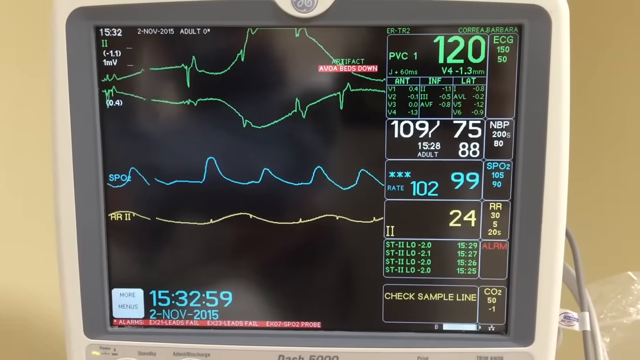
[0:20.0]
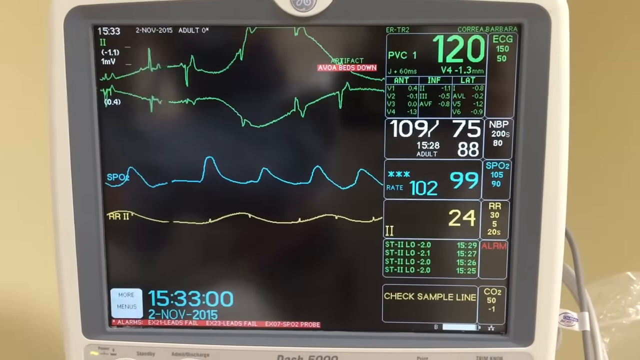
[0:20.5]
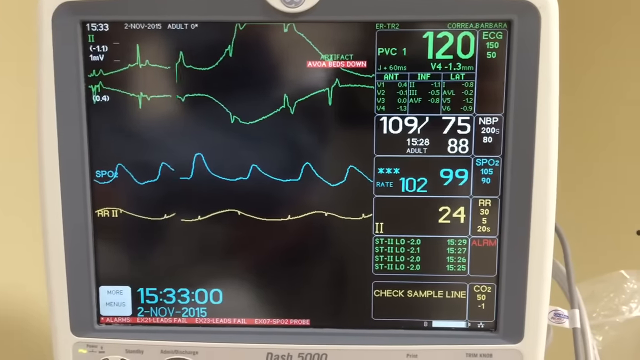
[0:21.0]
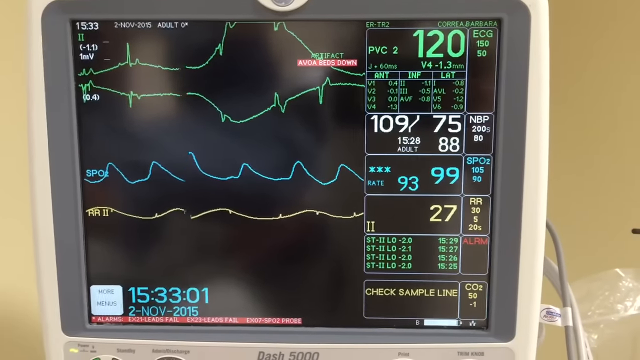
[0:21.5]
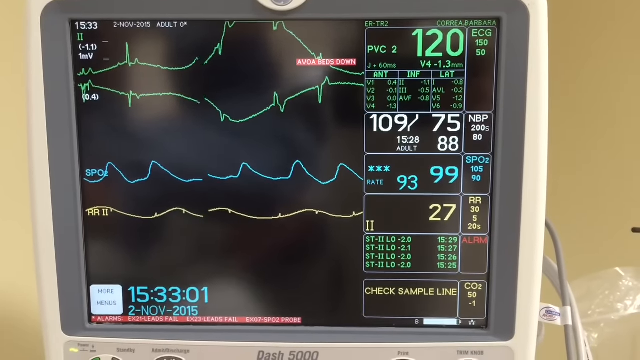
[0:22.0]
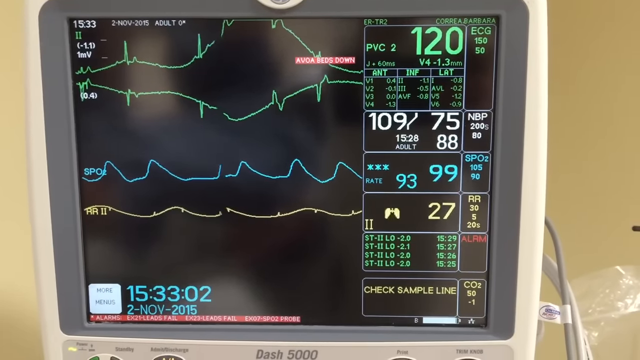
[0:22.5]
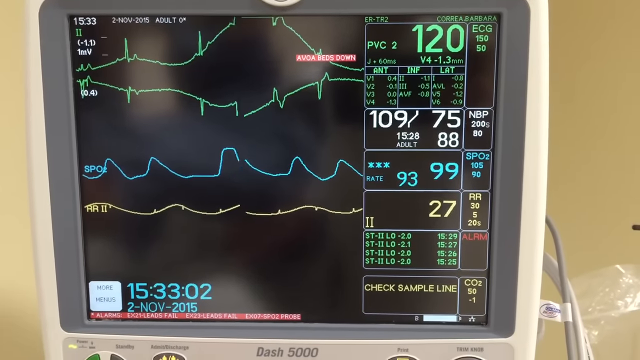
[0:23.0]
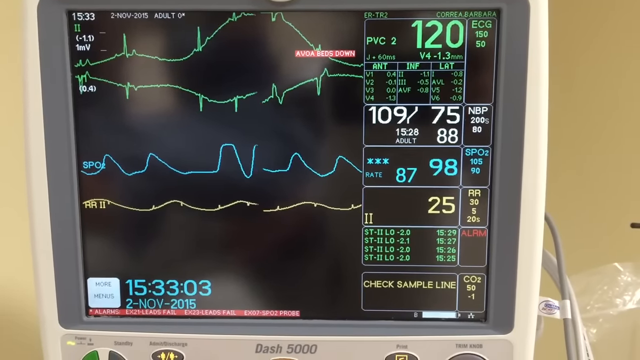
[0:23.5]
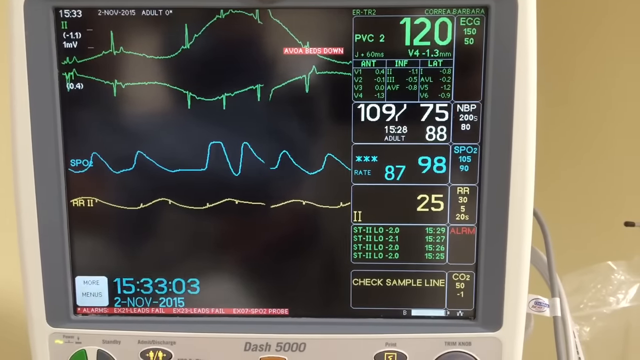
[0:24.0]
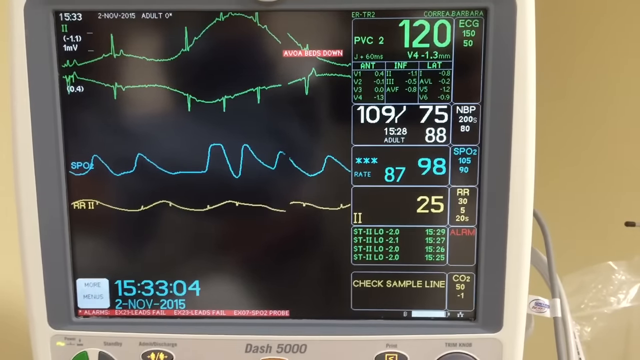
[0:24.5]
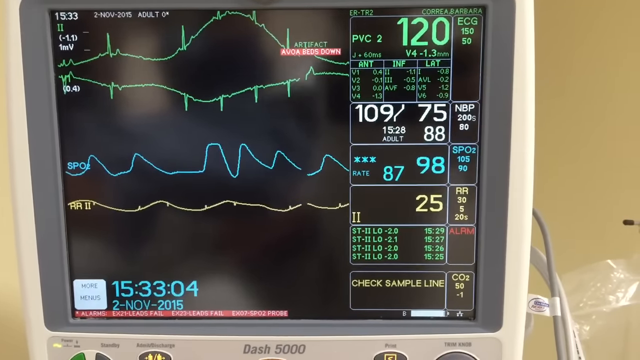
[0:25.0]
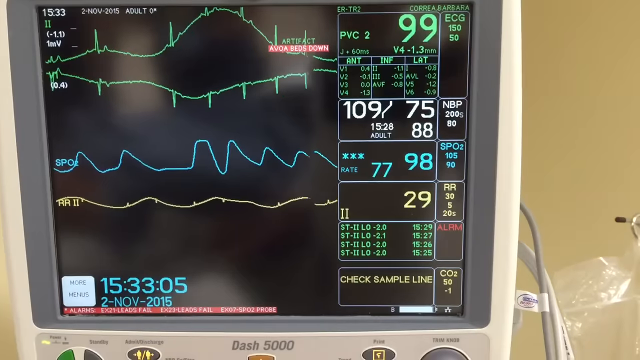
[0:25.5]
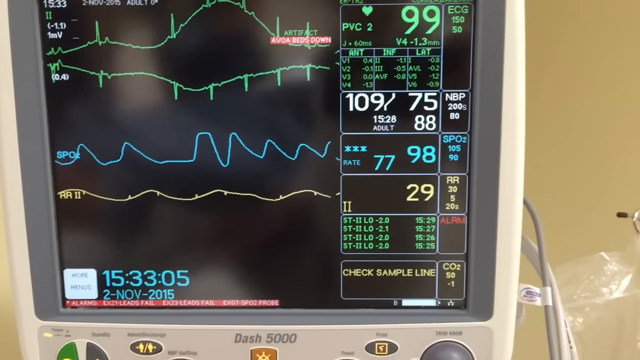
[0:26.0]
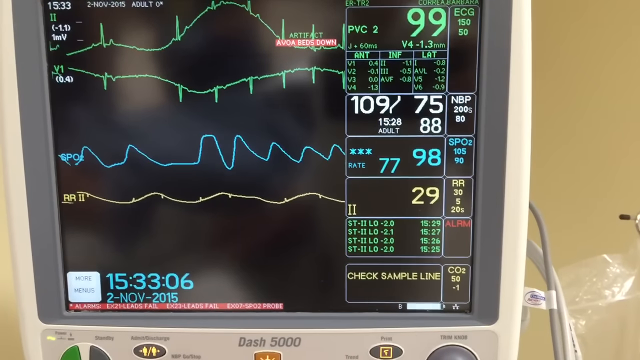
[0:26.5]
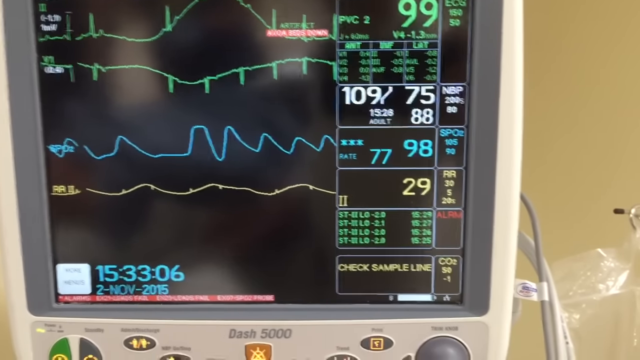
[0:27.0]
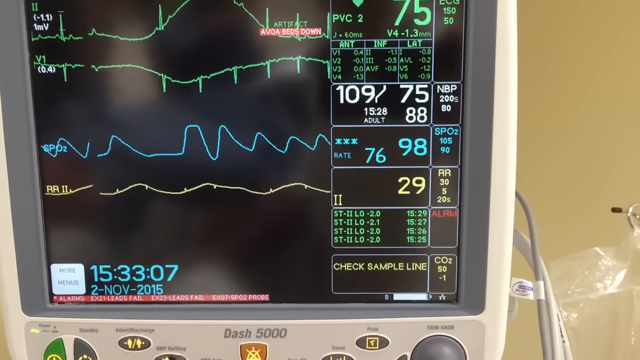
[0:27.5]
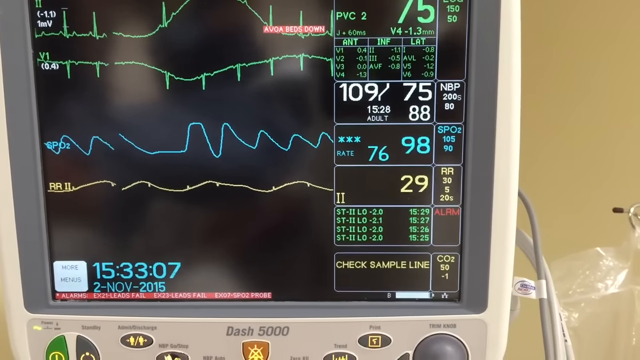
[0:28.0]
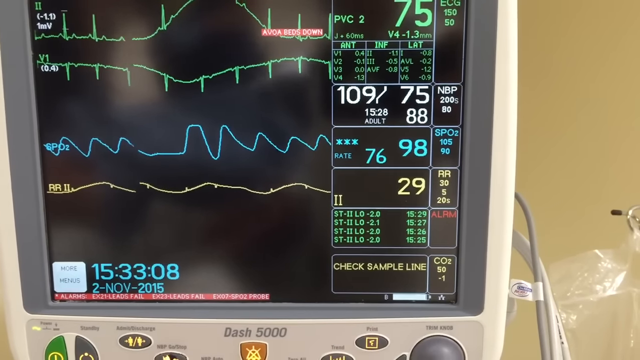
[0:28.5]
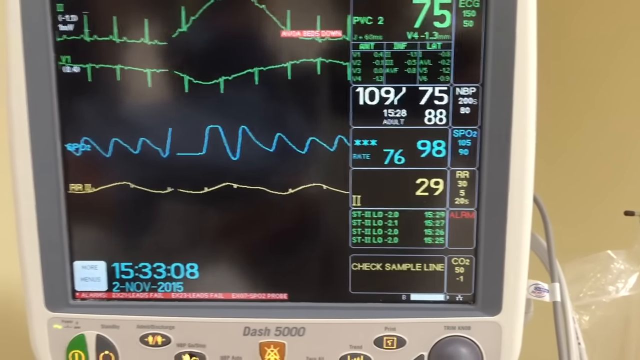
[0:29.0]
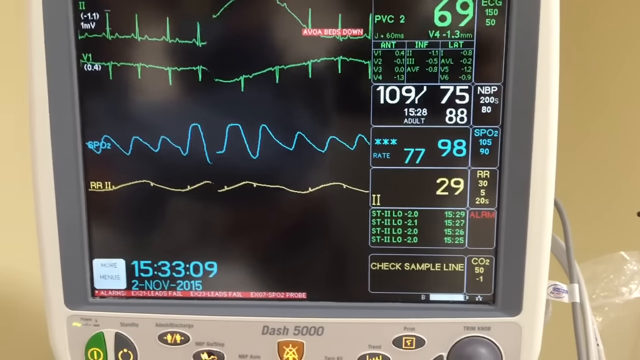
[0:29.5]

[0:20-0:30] The heart rate numbers come back on the screen, reading around 79, within a normal range. The monitor continues displaying everything steadily and the graphs look normal. Toward the end, the heart rate suddenly jumps from the 70s up to 120.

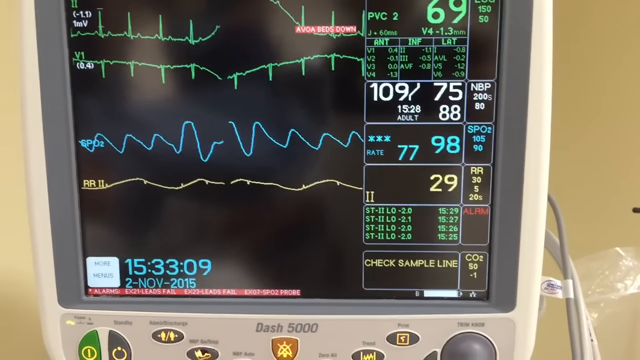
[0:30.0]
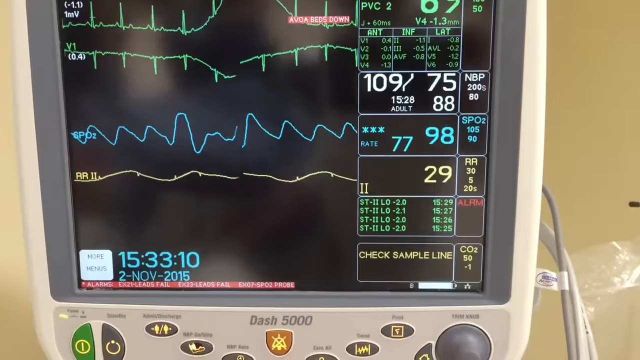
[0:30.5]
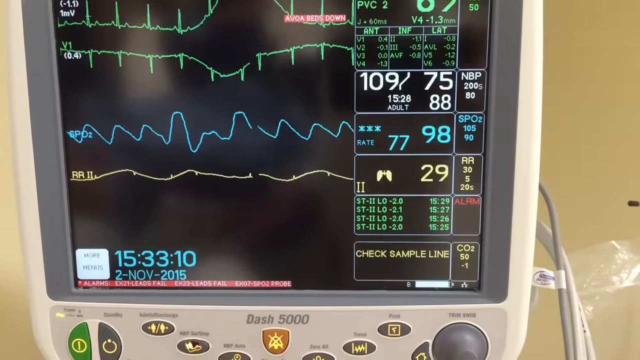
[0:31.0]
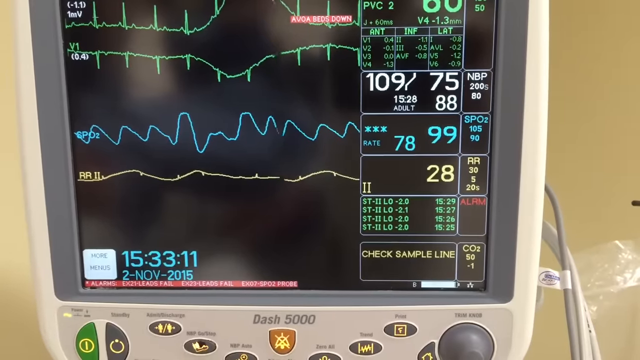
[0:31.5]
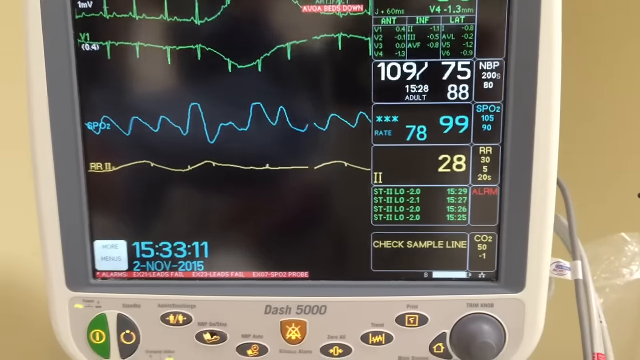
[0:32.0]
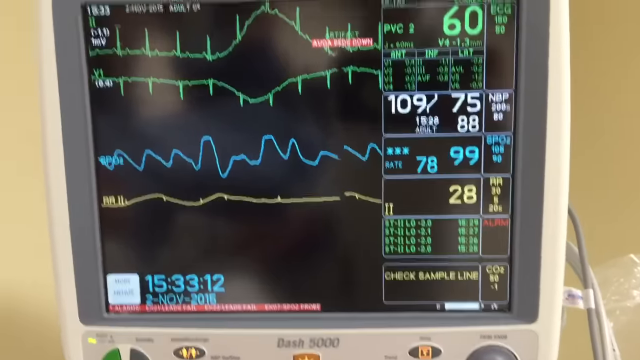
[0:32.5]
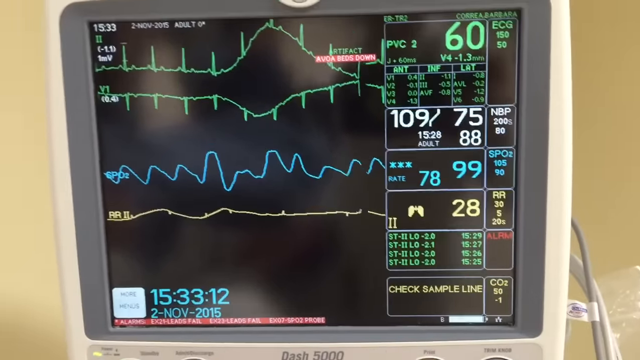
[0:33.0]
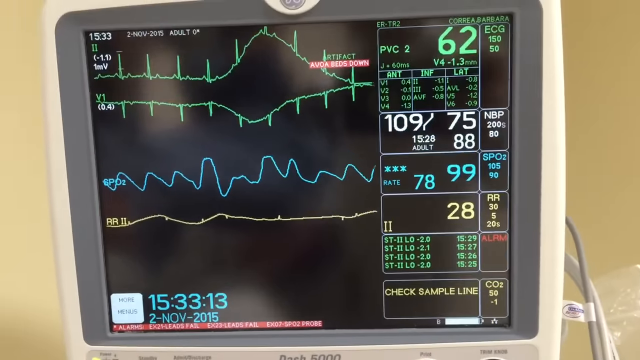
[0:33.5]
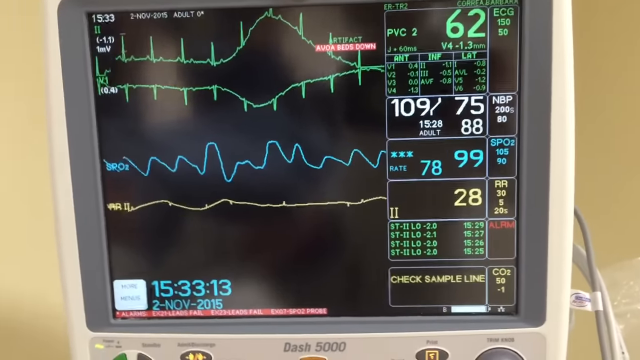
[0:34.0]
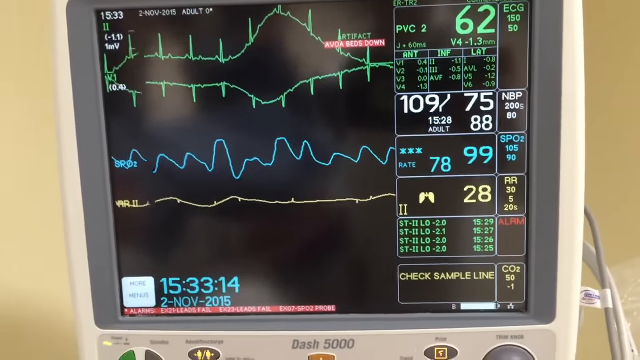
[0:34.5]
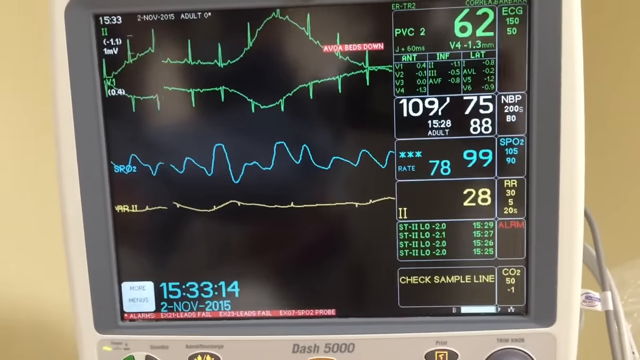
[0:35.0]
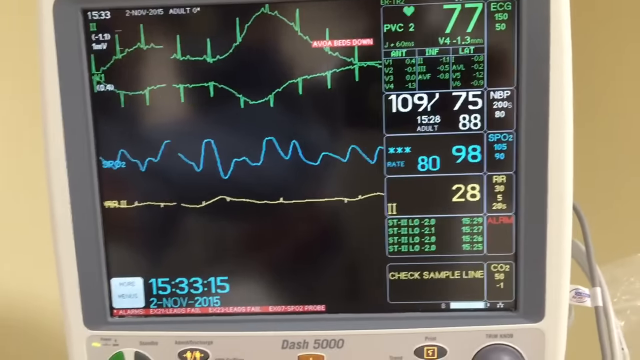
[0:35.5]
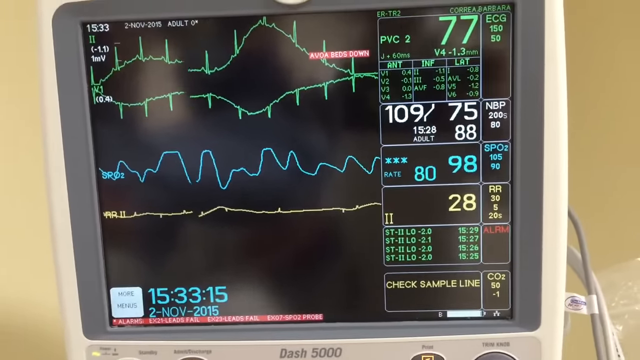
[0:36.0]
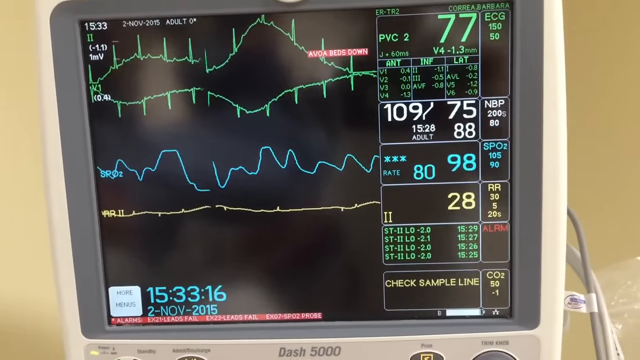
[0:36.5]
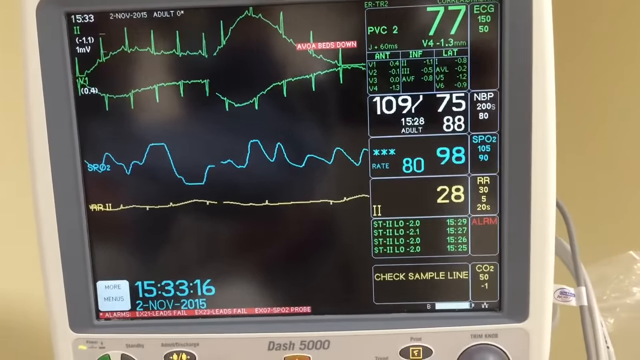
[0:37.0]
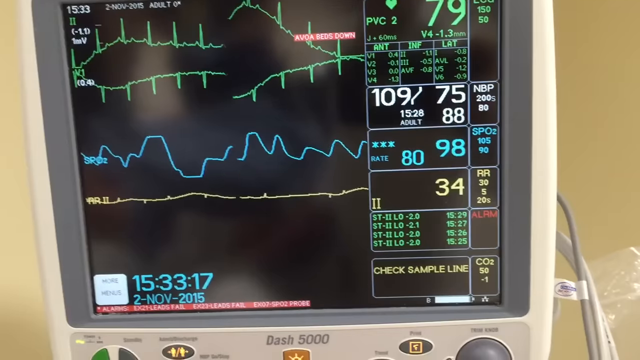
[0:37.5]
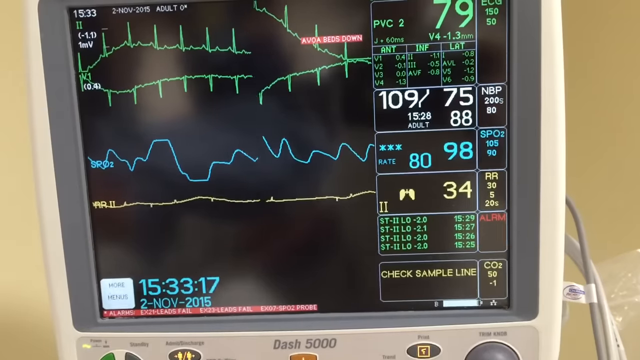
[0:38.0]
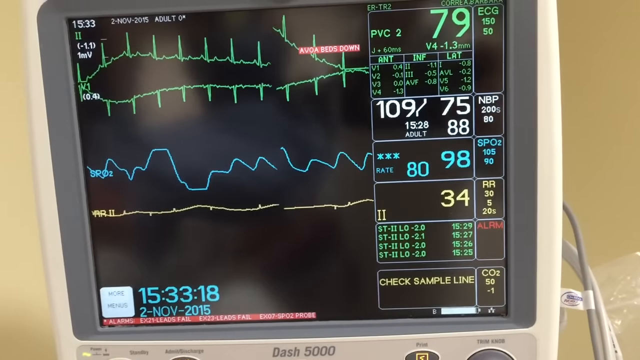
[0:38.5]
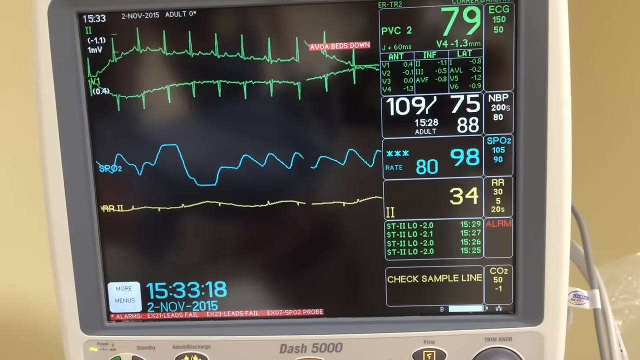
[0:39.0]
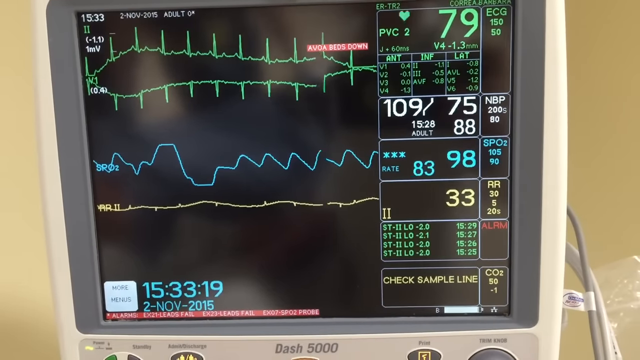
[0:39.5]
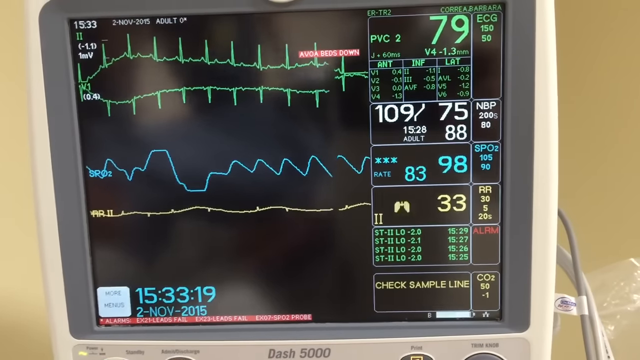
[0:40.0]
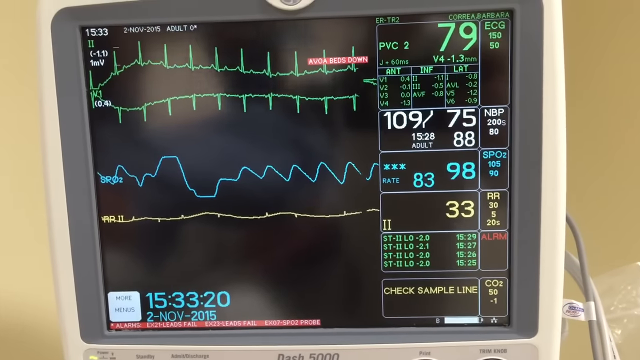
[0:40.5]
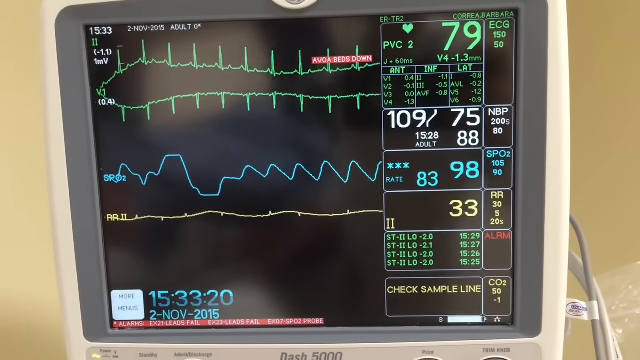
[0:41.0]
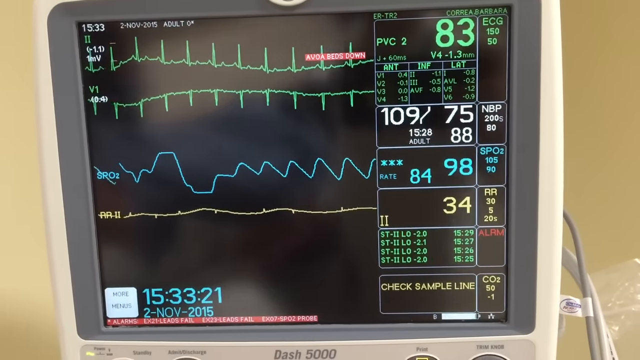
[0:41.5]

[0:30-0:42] The heart rate is the only reading that really changes, moving from the 70s to the low 80s and then to the 60s, while everything else stays the same. The oxygen reads 98 and the blood pressure stays basically the same. The heart rate graph rises sharply but its line is not connected, and at that same spot the bottom graph line and the oxygen graph line are also disconnected.